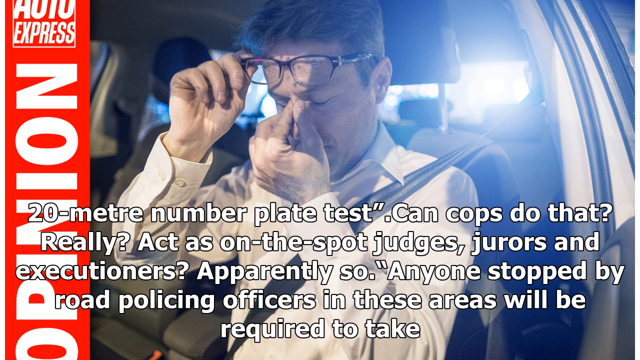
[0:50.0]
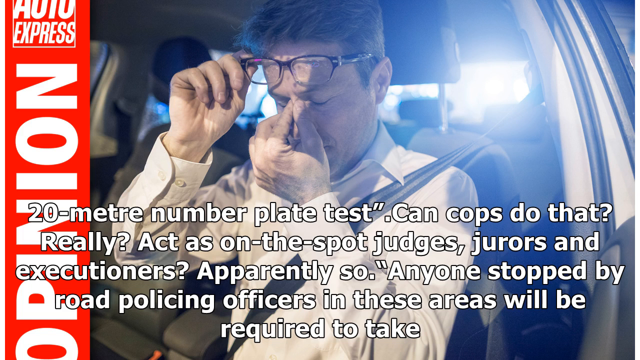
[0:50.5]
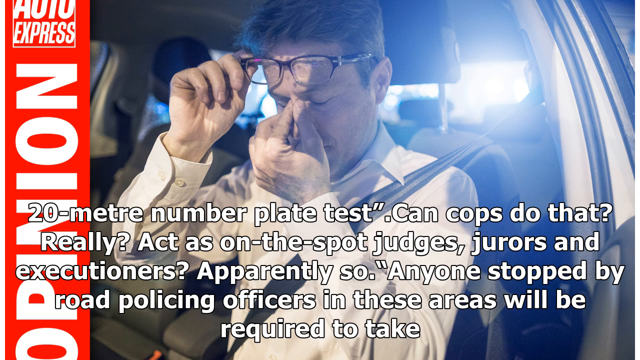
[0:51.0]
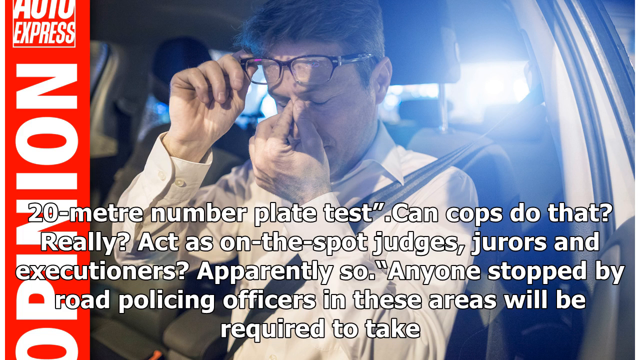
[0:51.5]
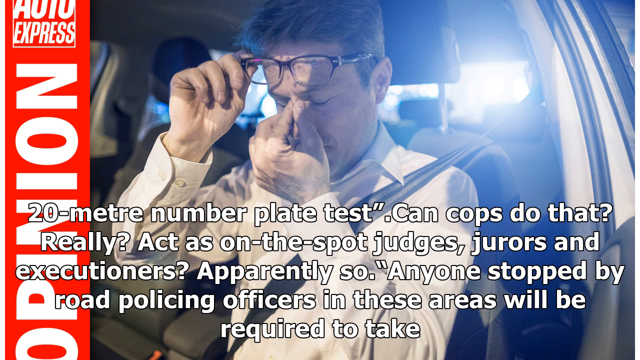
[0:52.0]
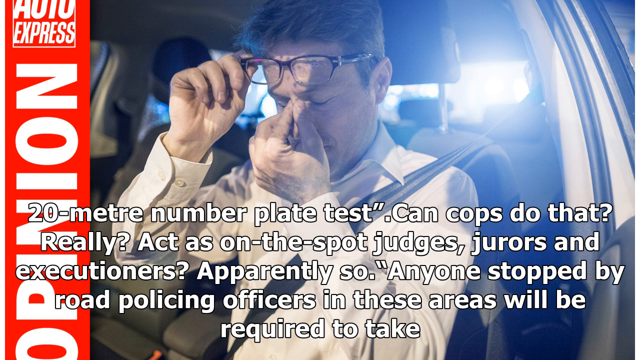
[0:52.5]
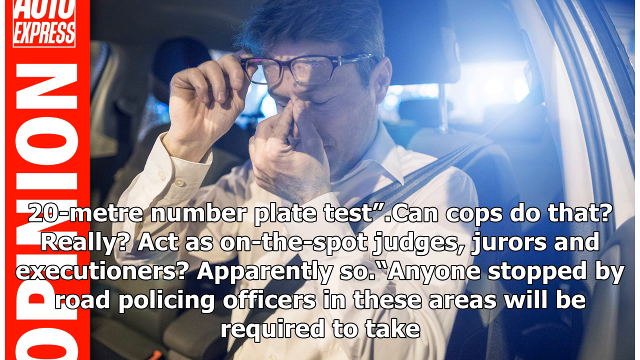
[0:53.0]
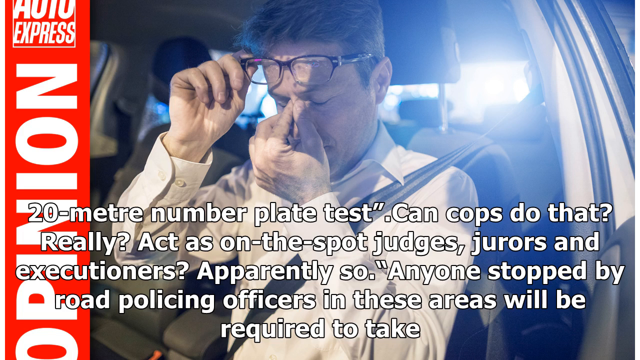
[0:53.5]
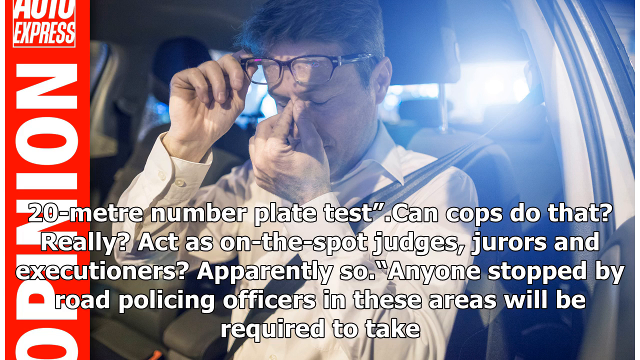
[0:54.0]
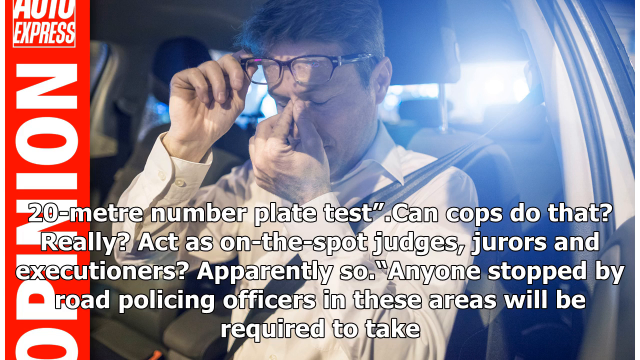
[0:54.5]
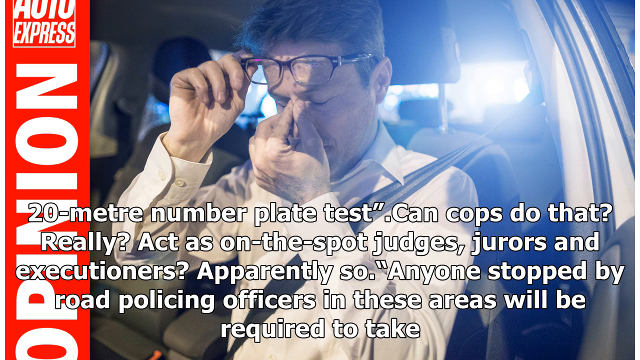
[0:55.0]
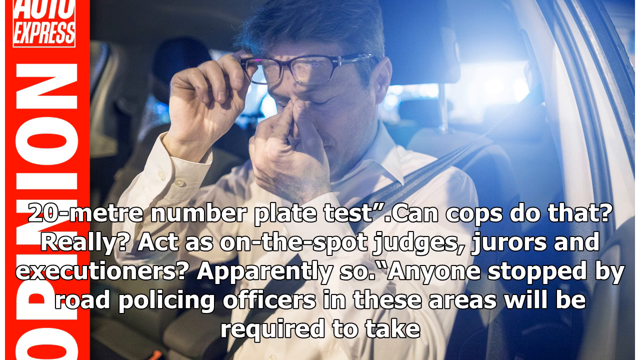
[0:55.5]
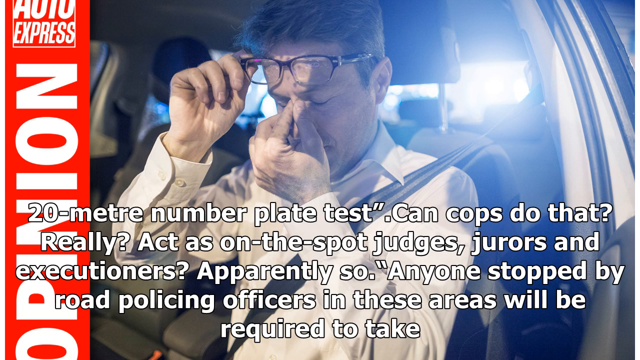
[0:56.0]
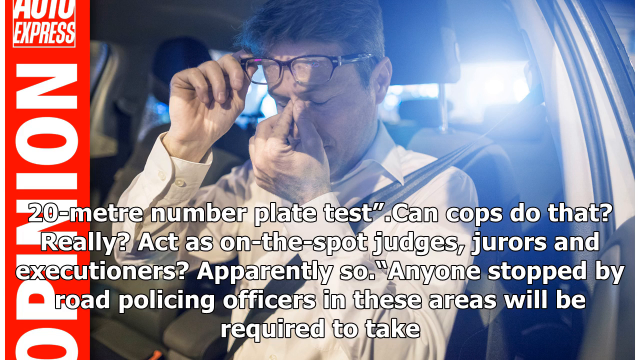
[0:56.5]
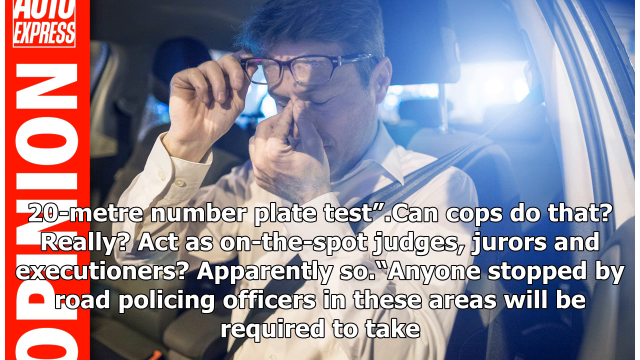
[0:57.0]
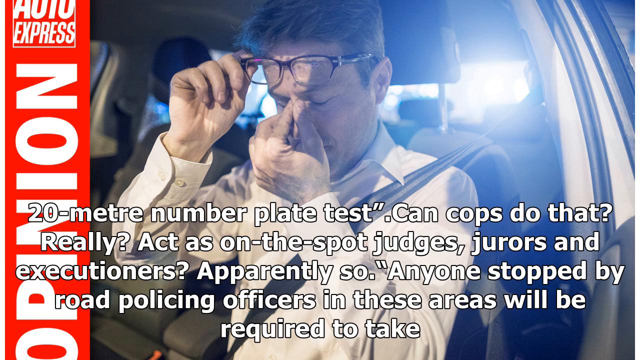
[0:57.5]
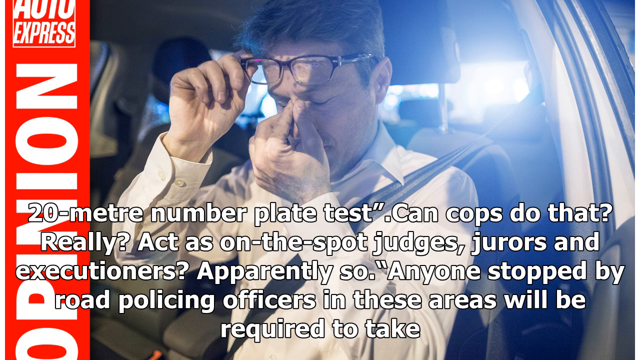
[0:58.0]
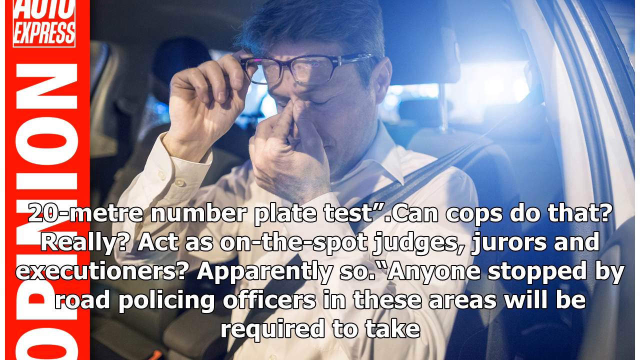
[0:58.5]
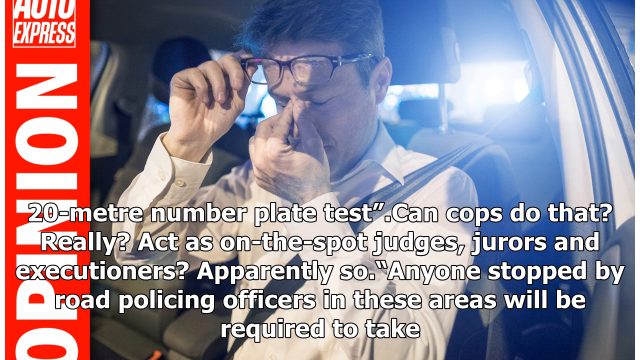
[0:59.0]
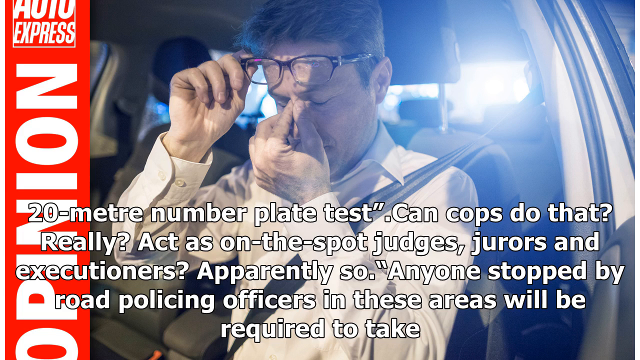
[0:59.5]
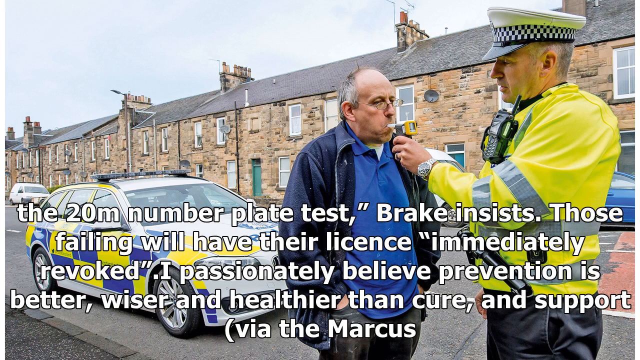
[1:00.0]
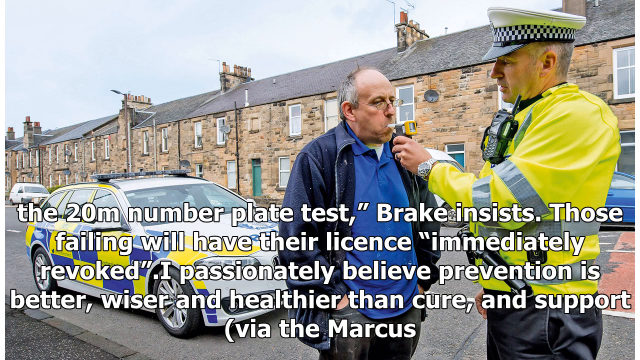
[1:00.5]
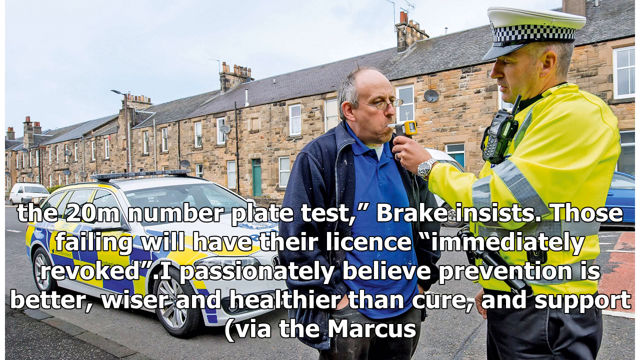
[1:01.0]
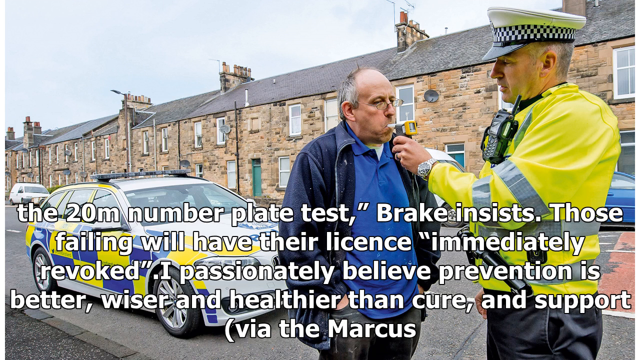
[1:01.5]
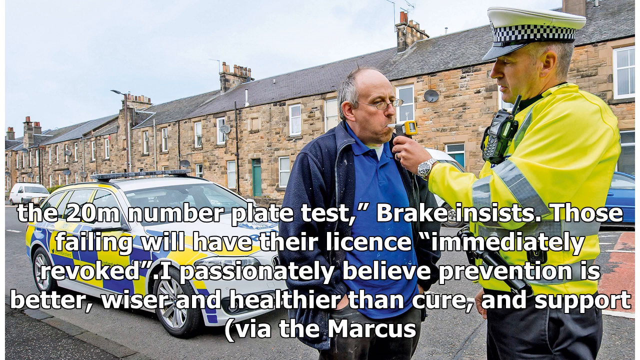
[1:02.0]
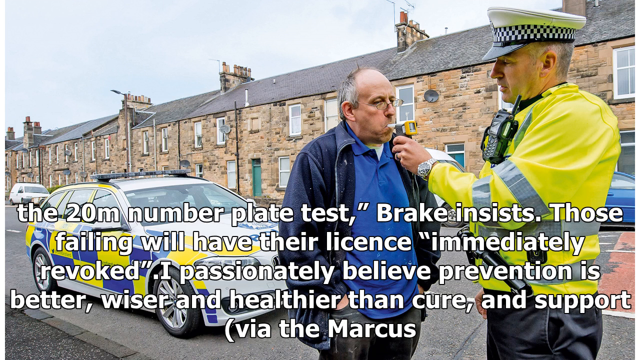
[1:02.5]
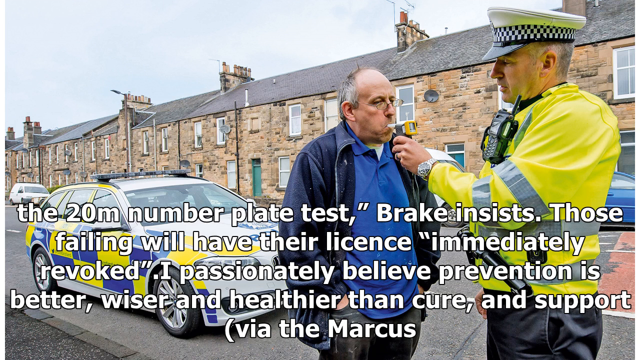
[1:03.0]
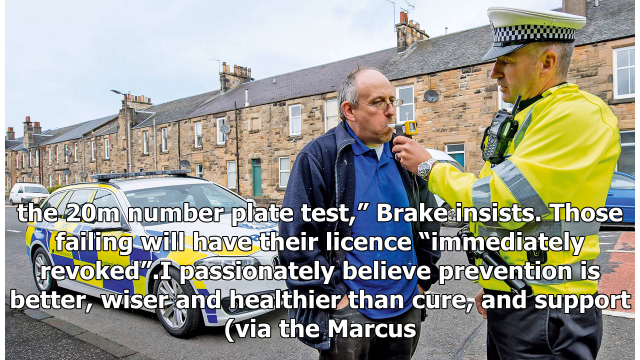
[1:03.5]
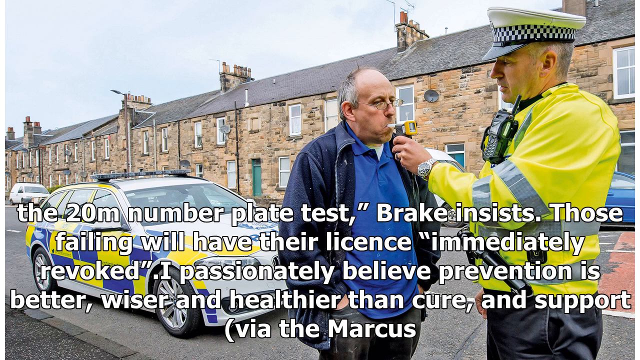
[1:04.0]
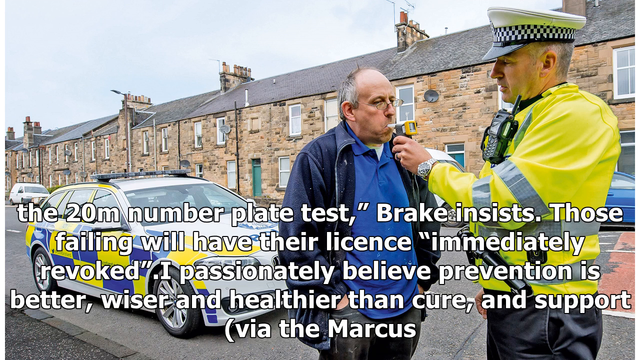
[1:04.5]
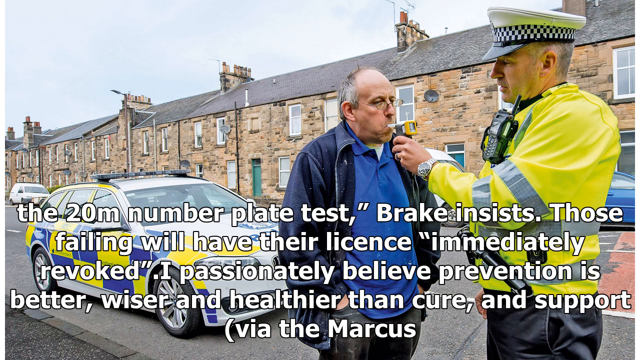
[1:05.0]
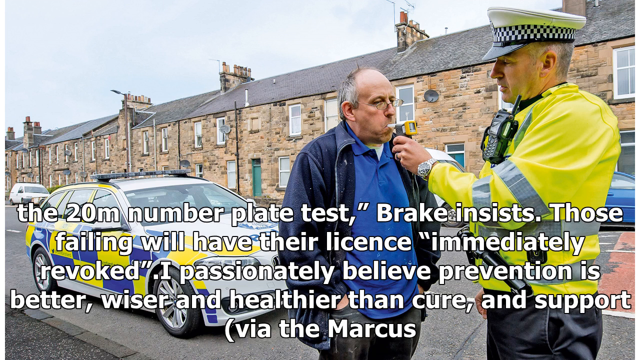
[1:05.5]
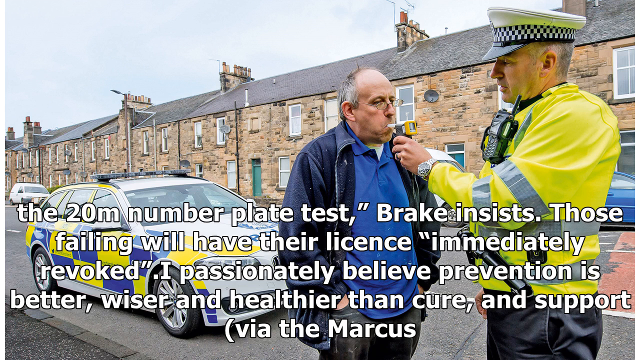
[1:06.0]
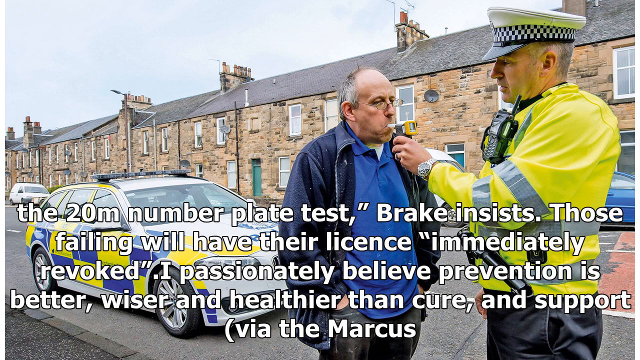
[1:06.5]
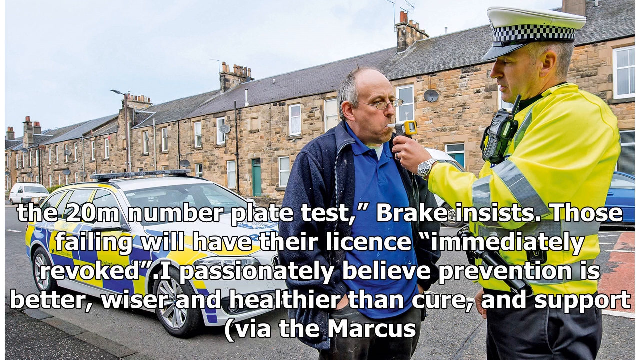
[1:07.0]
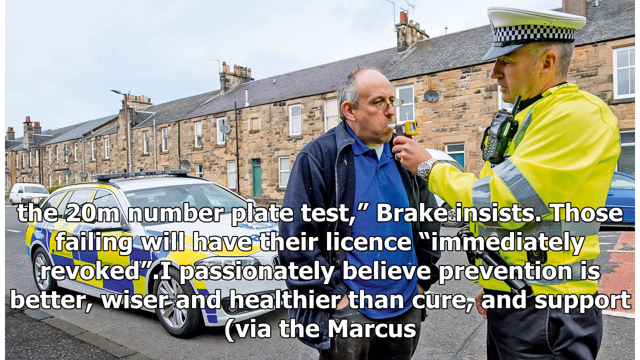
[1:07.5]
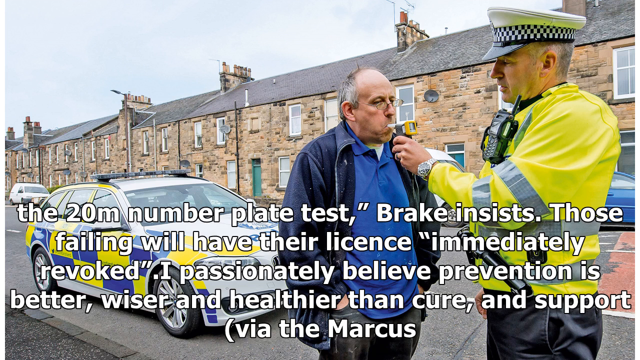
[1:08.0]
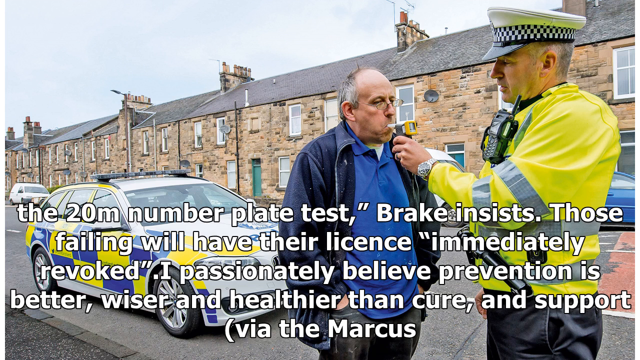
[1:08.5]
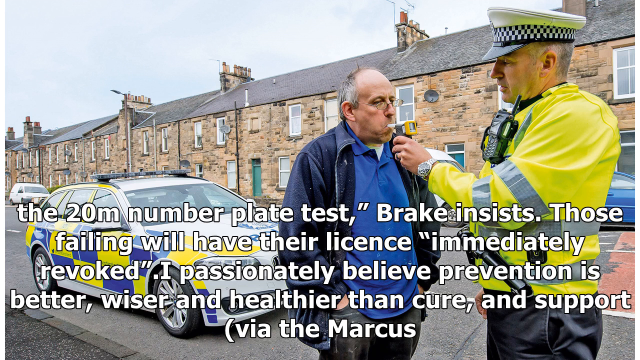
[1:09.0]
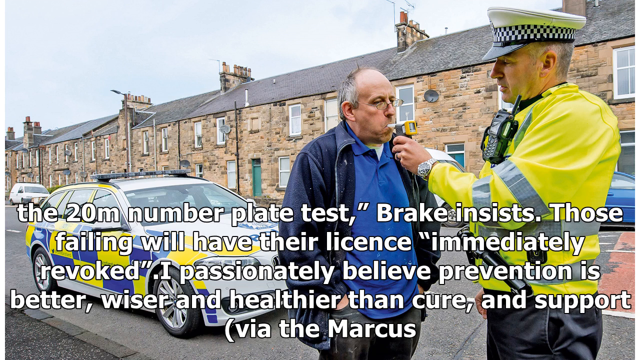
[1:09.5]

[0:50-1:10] A man who has been pulled over lifts up his glasses and kind of rubs the bridge of his nose. Text reads "20 meter number plate test. Can cops do that? Really? Act on the spot, judges, jurors, and executioners? Apparently so. Anyone stopped on the road policing officers in these areas will be," followed by more words. The video skips ahead slightly, and text about the 20 m number plate test says those failing will have their licenses revoked. On the left side, white words on a fully red background read "auto express opinion."